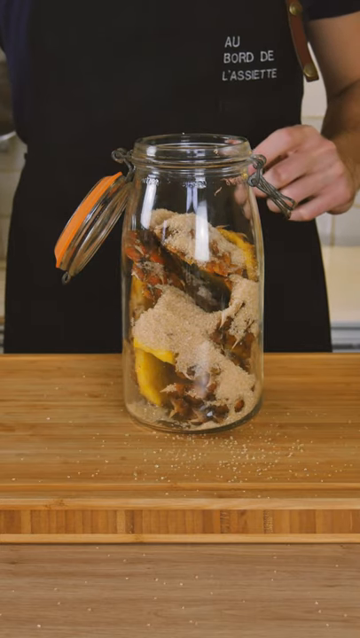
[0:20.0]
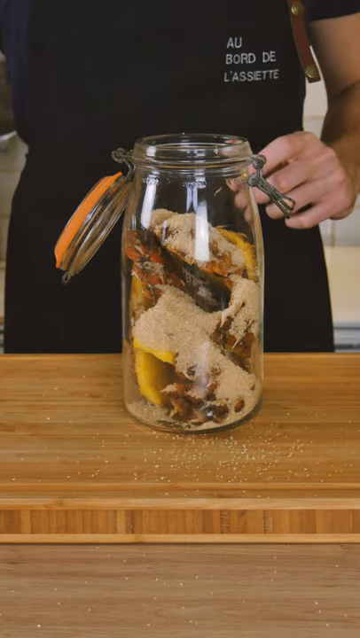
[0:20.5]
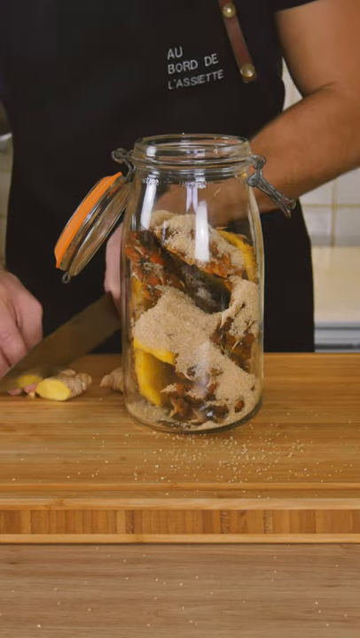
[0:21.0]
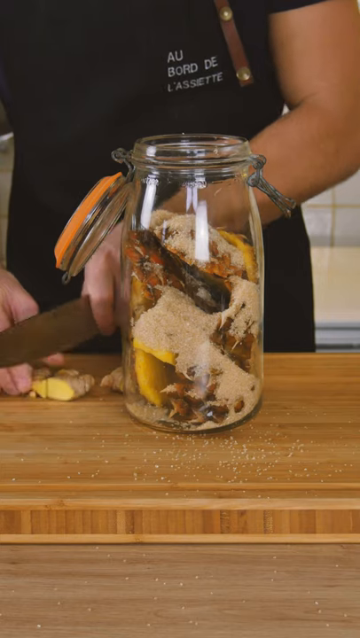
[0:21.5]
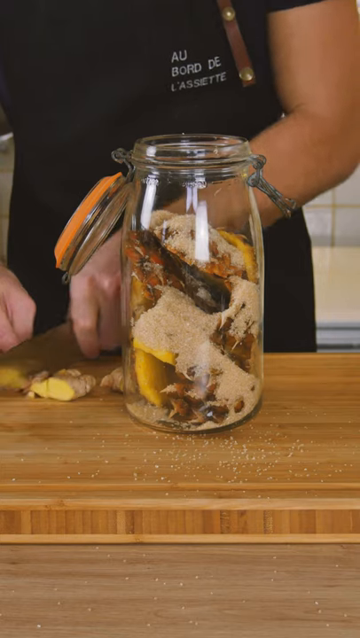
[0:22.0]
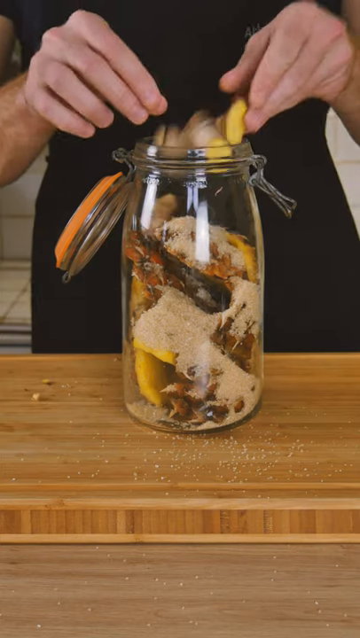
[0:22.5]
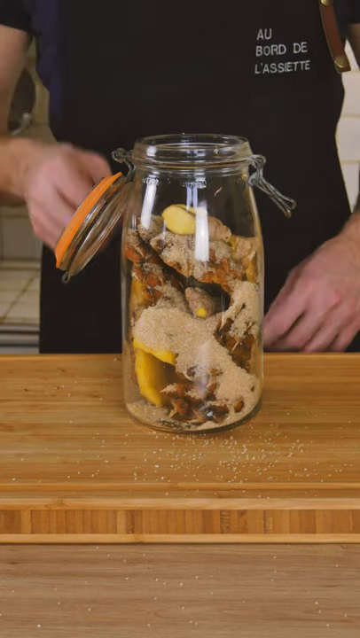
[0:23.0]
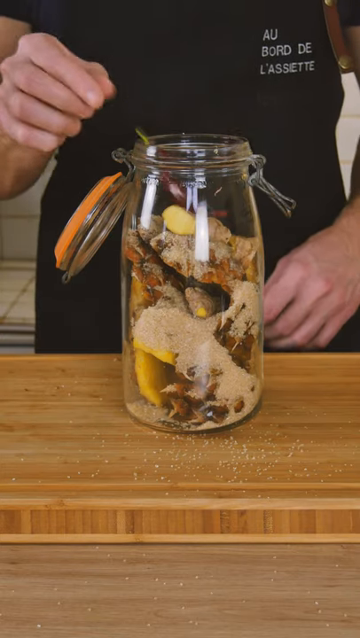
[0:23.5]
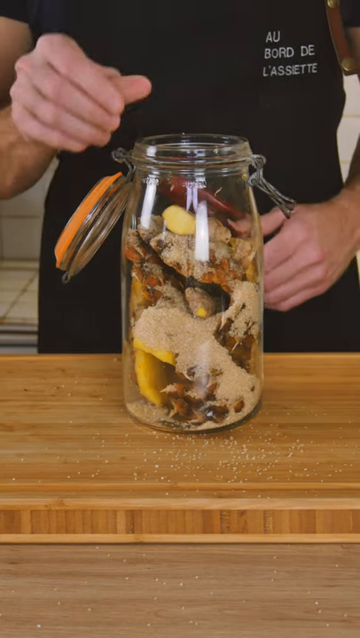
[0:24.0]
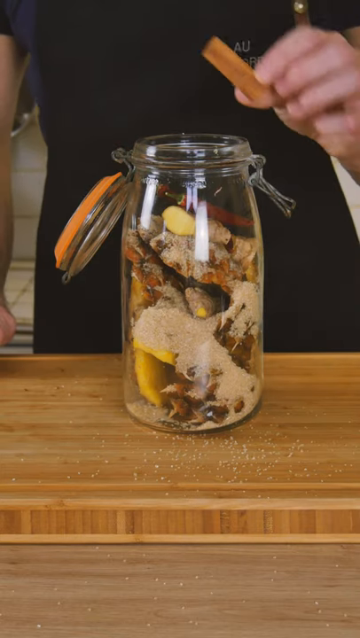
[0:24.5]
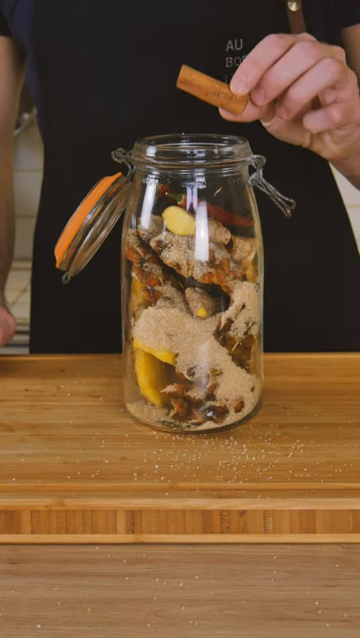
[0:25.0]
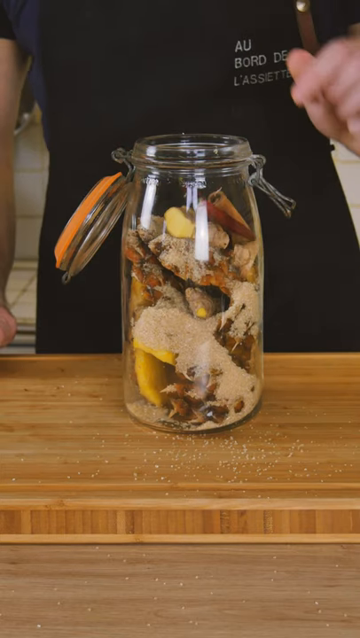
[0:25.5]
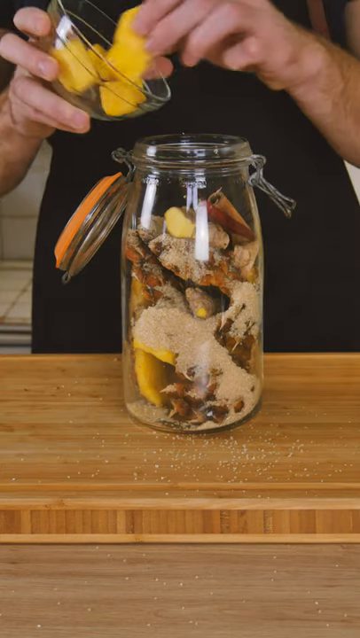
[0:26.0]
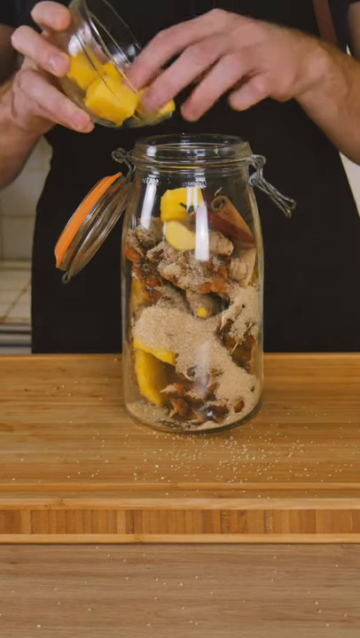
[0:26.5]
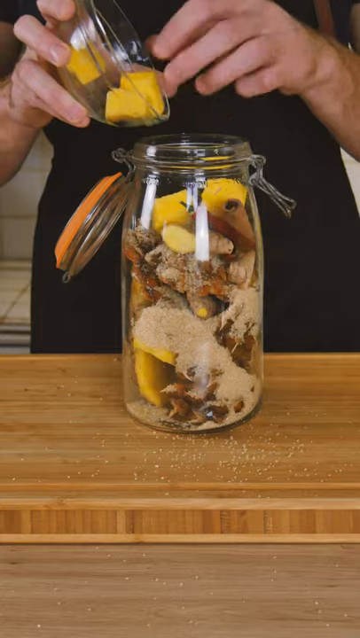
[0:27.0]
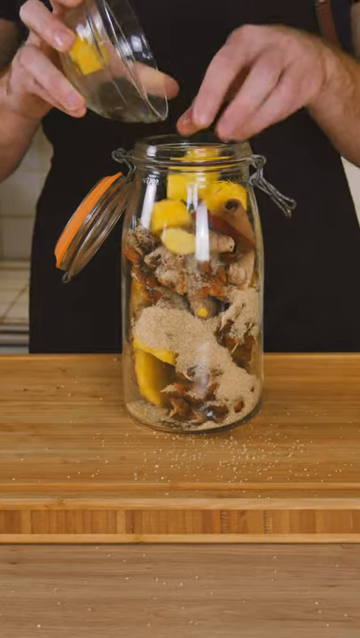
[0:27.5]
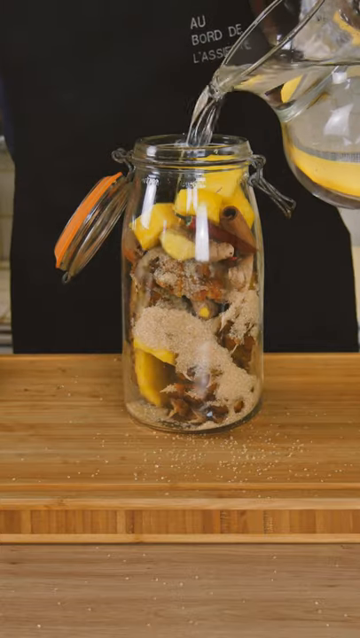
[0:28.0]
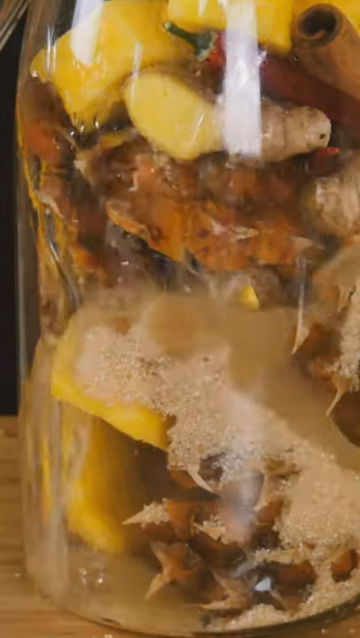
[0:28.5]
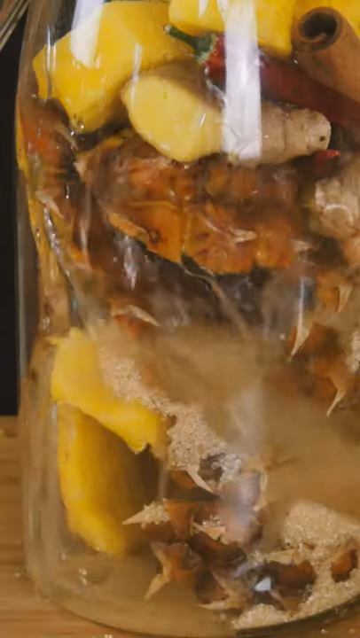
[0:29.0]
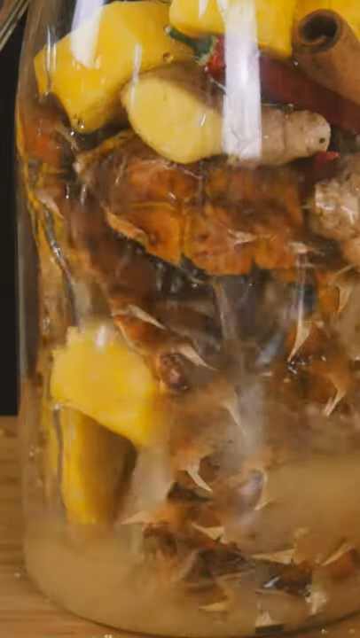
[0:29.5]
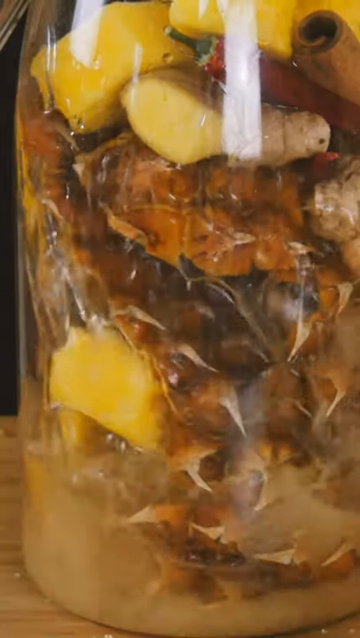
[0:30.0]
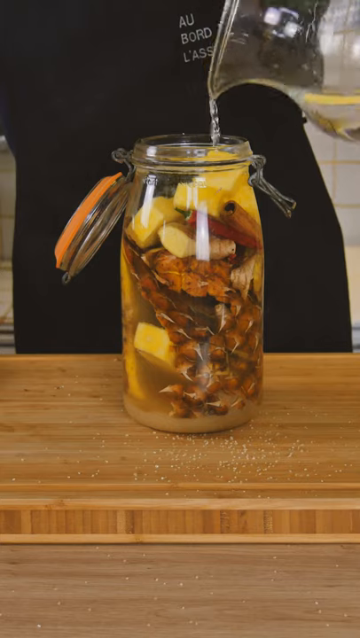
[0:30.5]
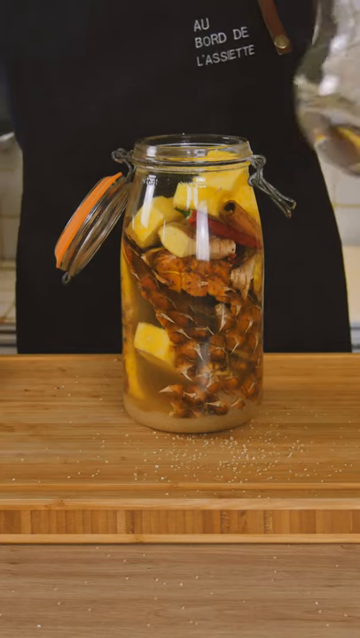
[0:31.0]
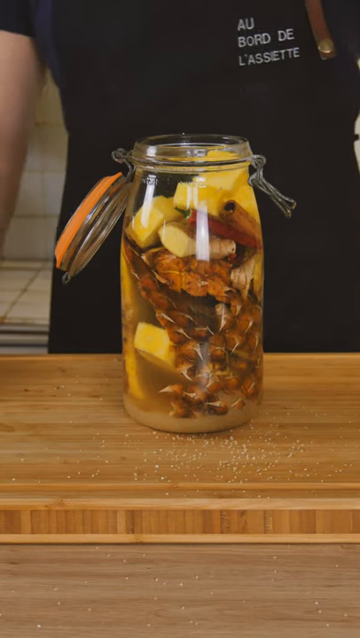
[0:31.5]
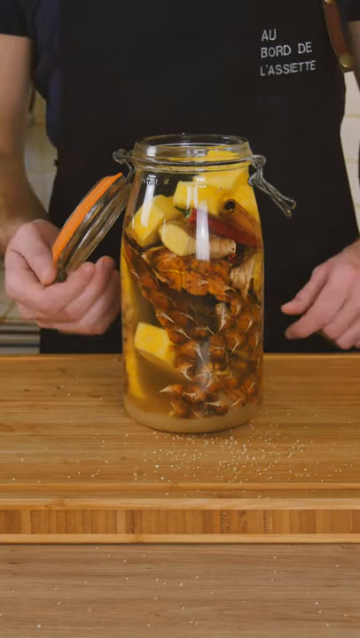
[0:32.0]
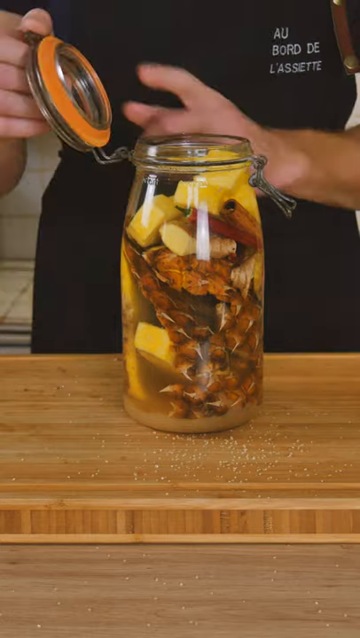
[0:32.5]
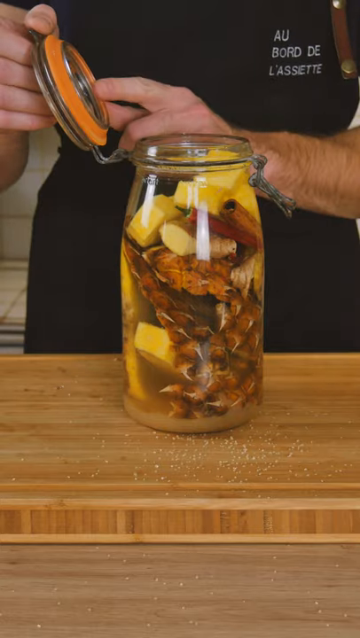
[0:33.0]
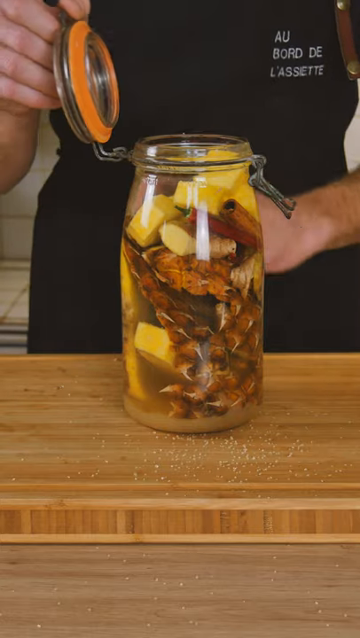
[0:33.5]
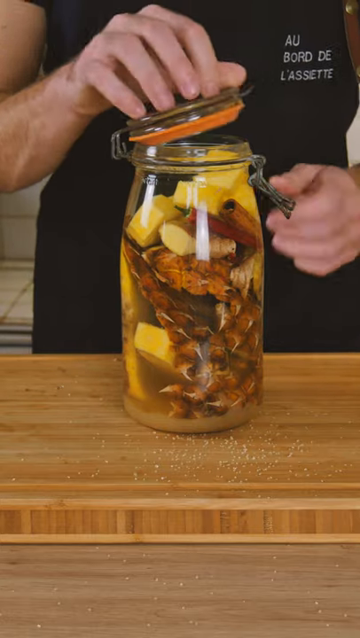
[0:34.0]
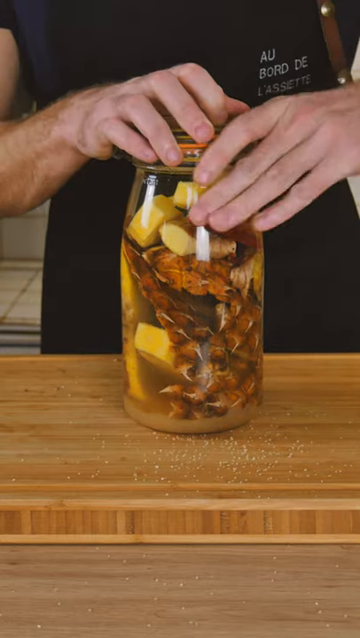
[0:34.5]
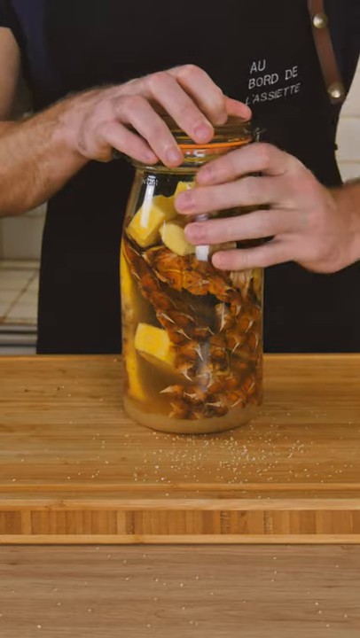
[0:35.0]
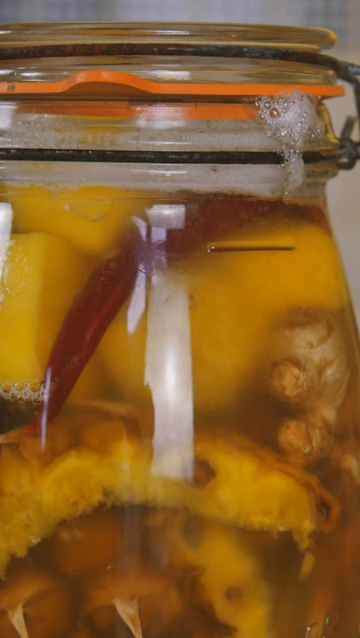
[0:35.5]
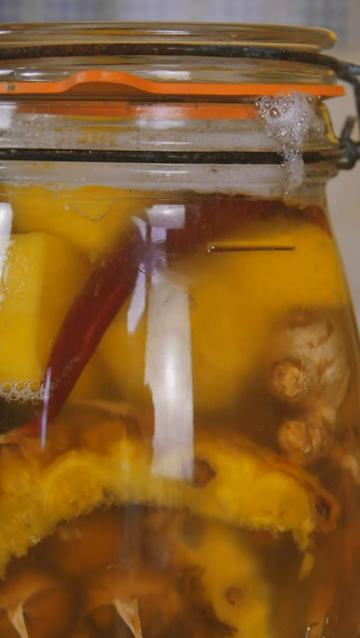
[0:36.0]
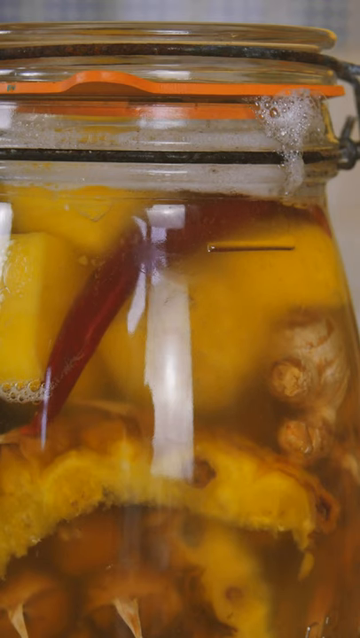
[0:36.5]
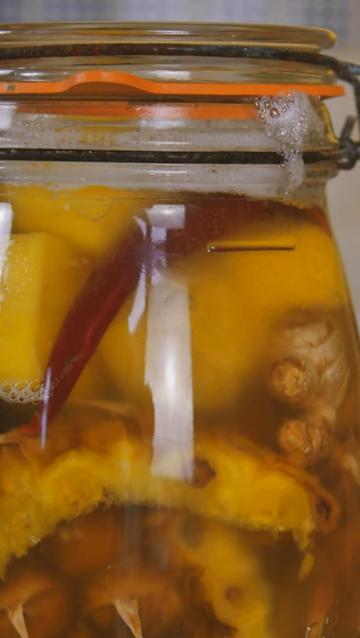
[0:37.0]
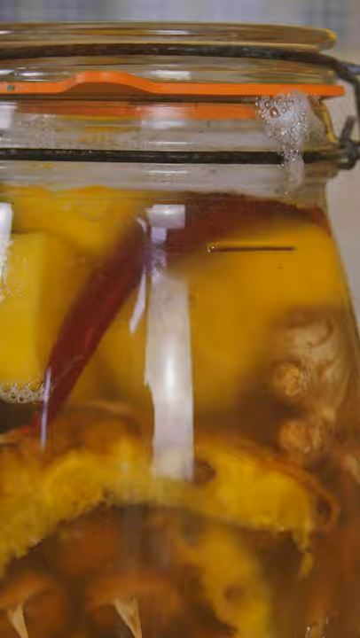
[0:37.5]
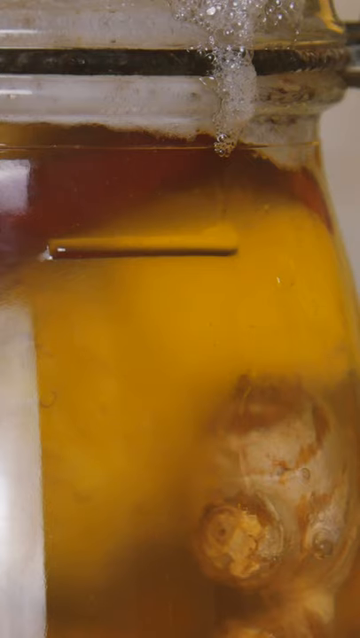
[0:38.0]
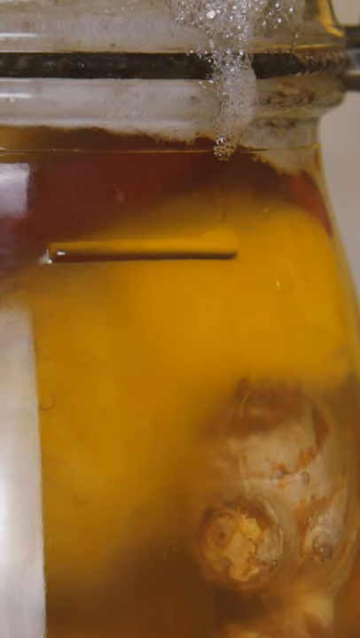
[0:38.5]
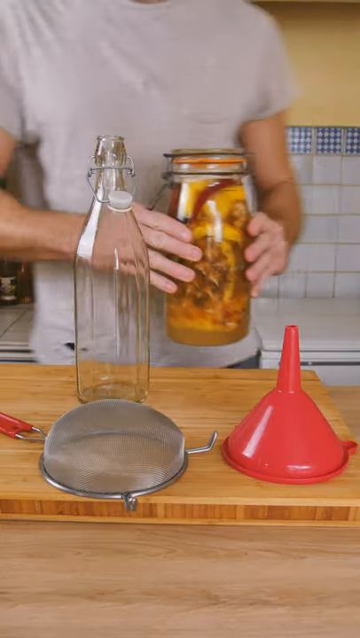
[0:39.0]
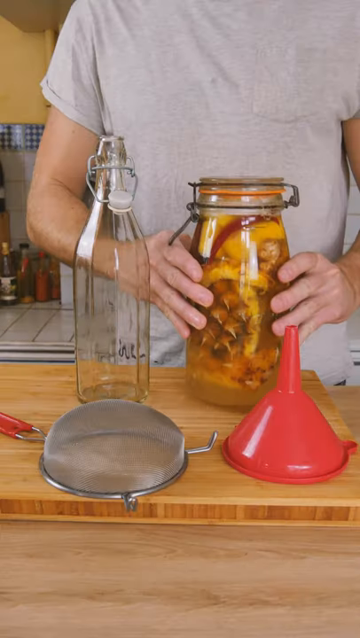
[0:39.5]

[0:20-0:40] The person cuts up some fresh ginger and sprinkles it into the jar with the pineapple slices. What look like thin red chilies go on top, then a stick of cinnamon, then some chunks of pineapple, and then they pour a clear liquid that looks like water over it. They seal the lid on the jar, and the jar is shown sitting, presumably over time. The chef wears a black apron with French text that appears to read "Au Bord de L'Assette".